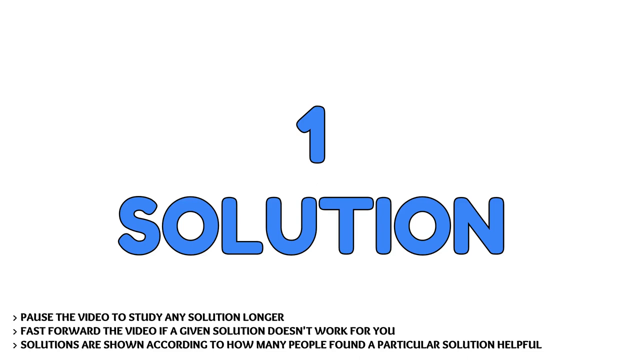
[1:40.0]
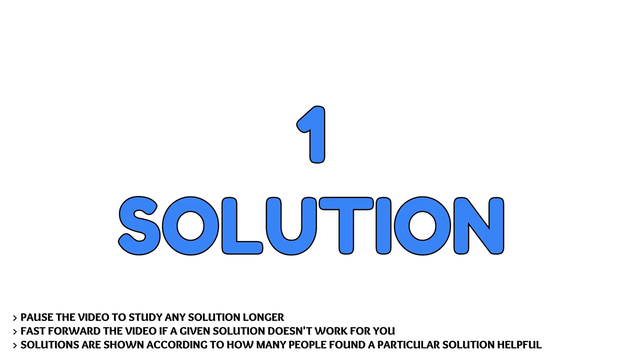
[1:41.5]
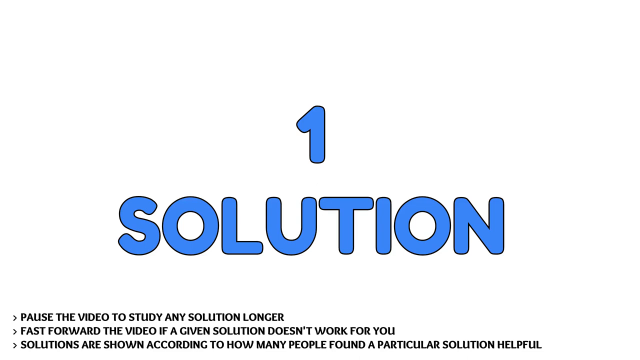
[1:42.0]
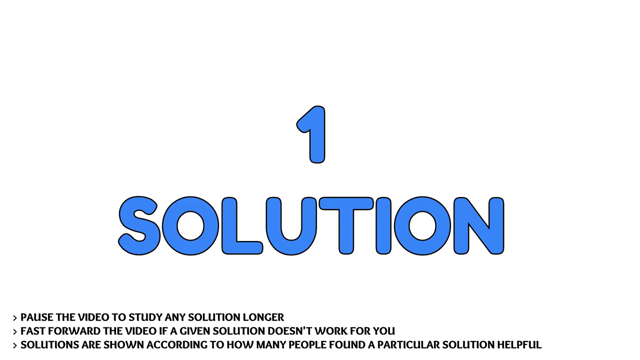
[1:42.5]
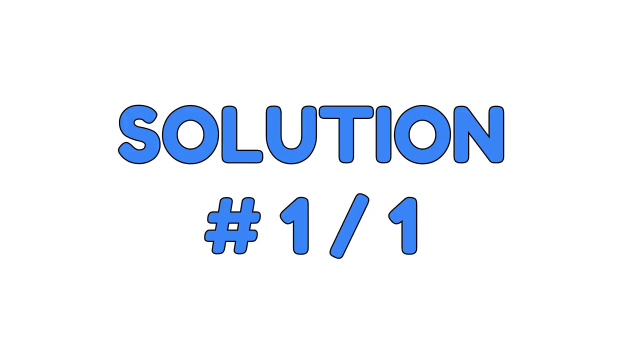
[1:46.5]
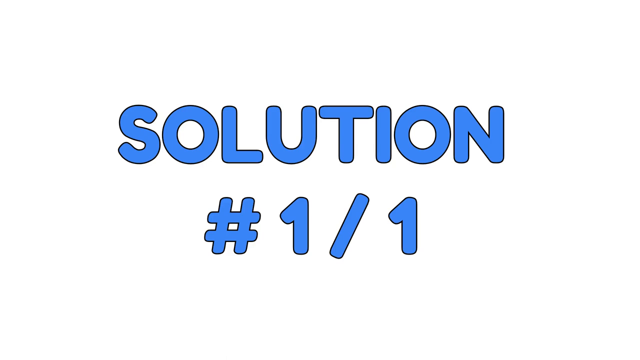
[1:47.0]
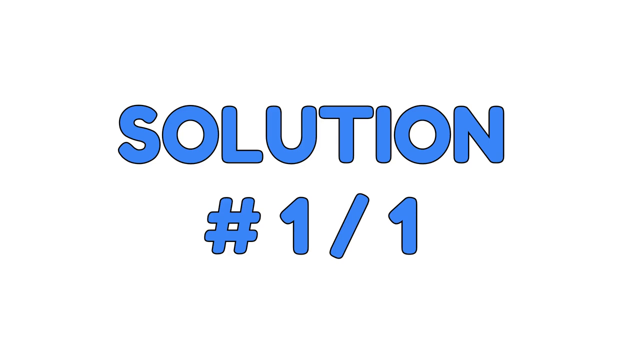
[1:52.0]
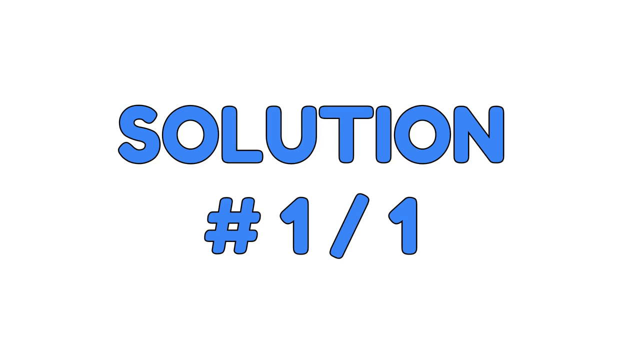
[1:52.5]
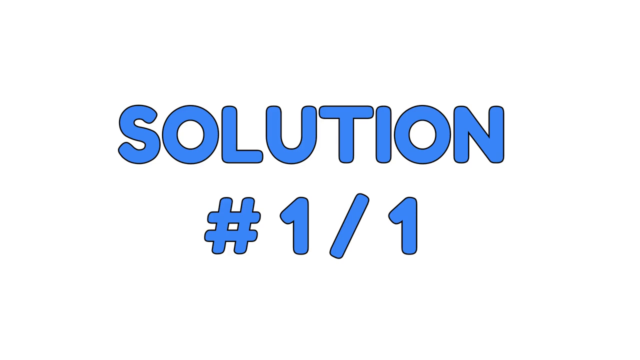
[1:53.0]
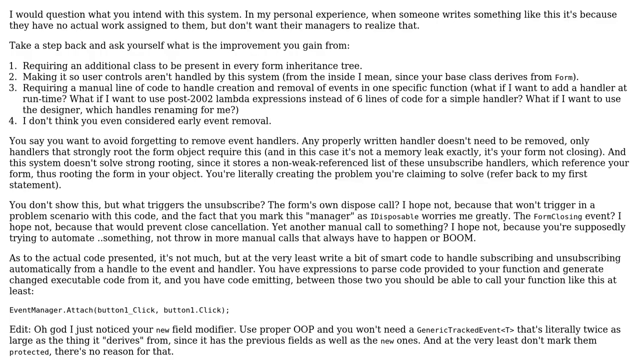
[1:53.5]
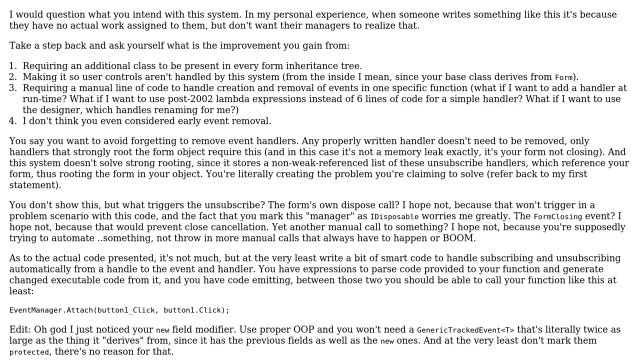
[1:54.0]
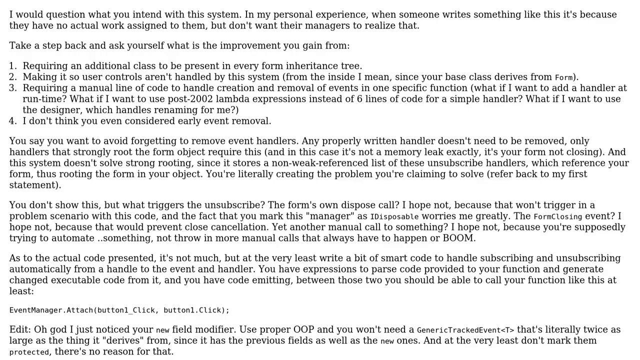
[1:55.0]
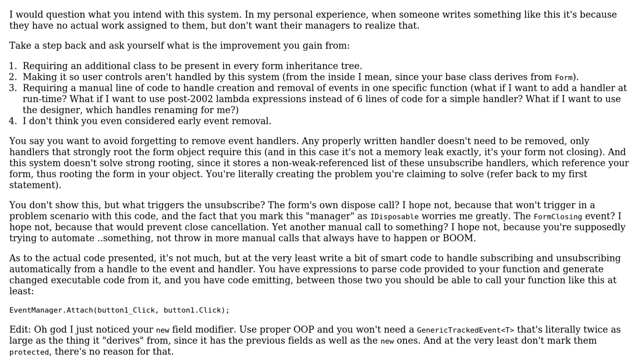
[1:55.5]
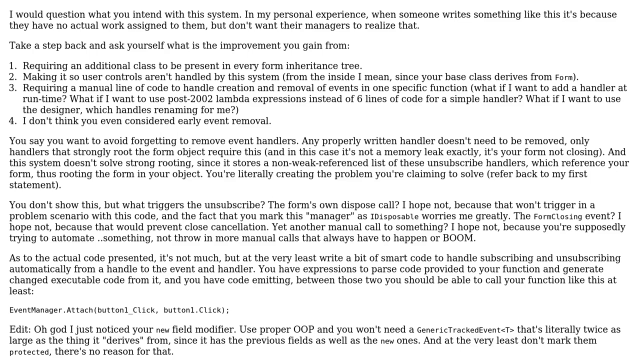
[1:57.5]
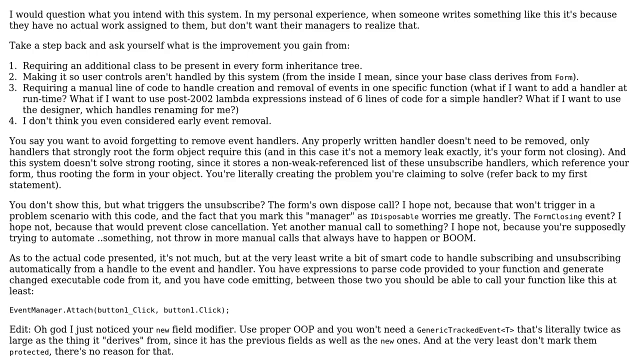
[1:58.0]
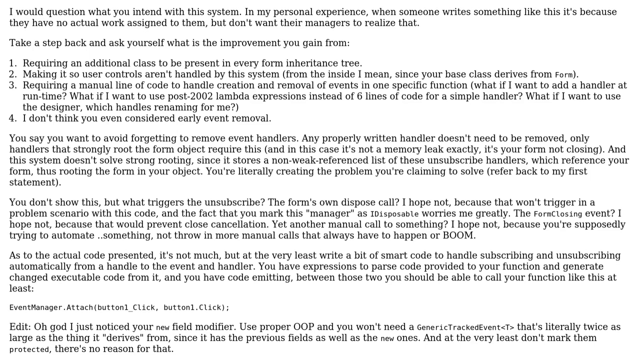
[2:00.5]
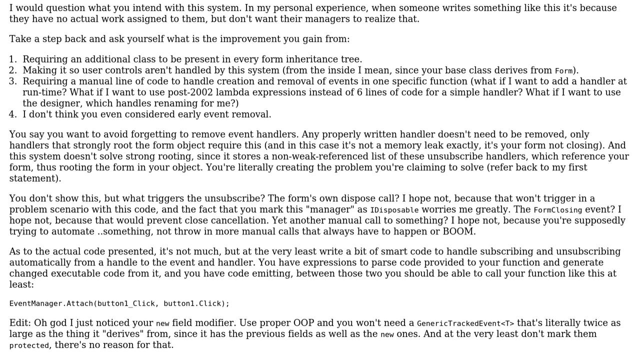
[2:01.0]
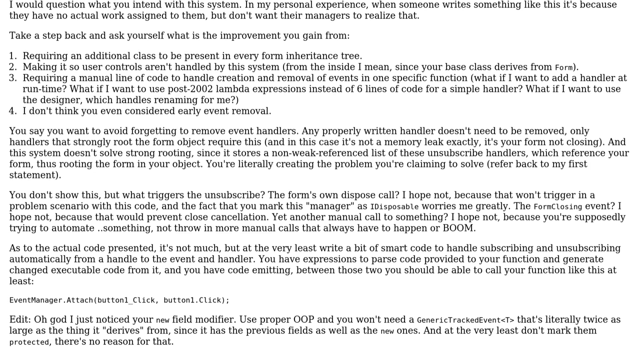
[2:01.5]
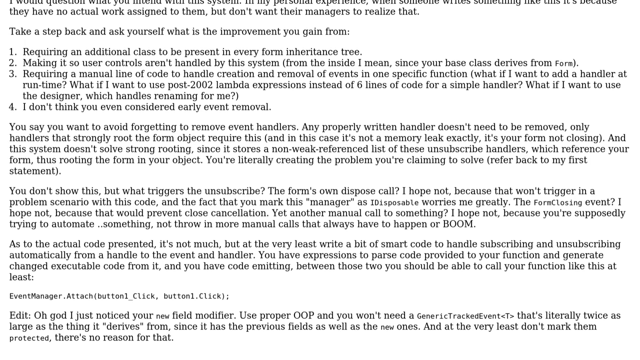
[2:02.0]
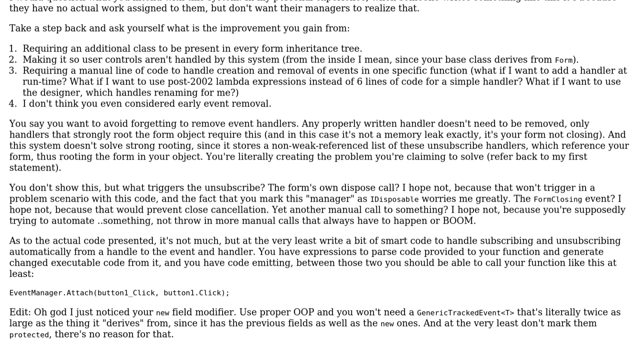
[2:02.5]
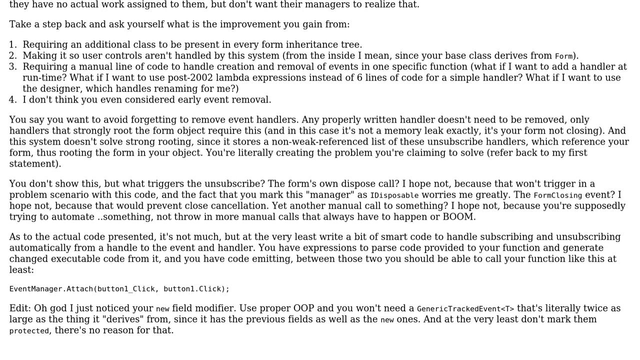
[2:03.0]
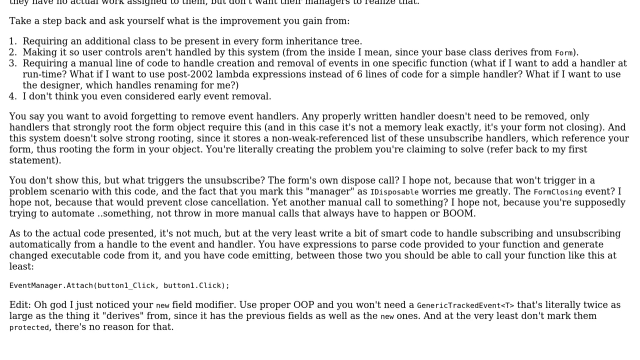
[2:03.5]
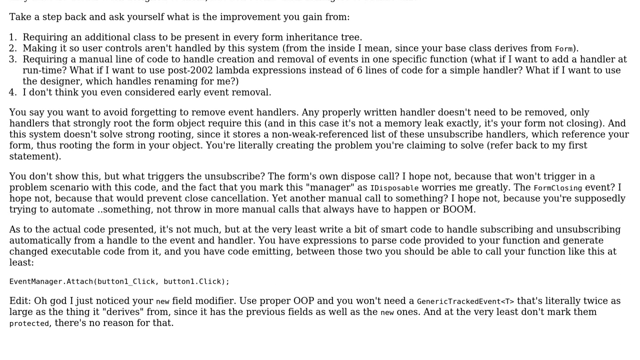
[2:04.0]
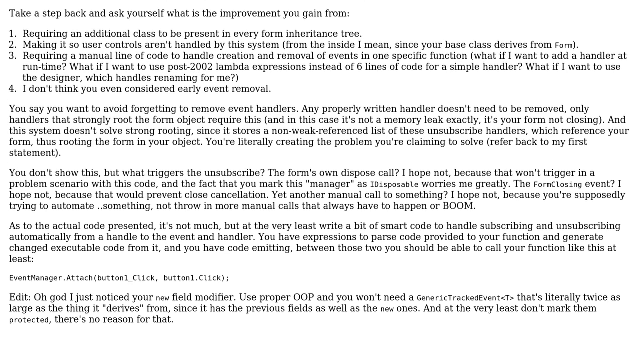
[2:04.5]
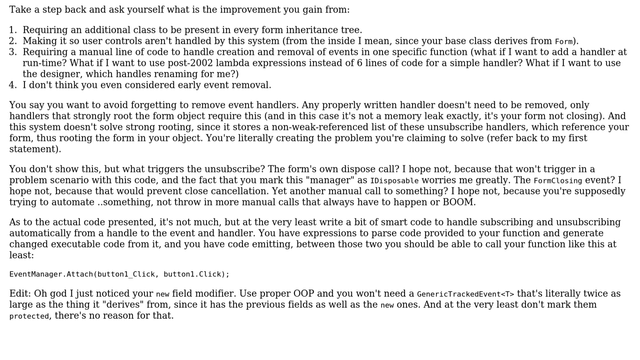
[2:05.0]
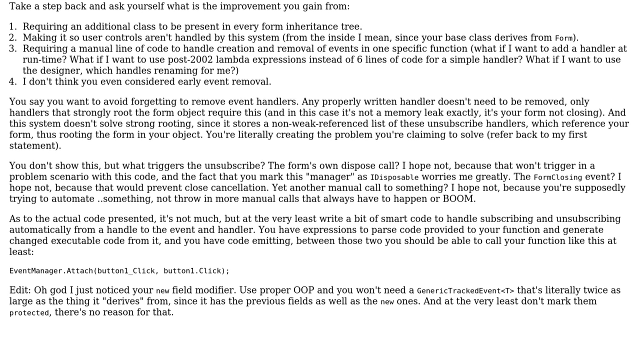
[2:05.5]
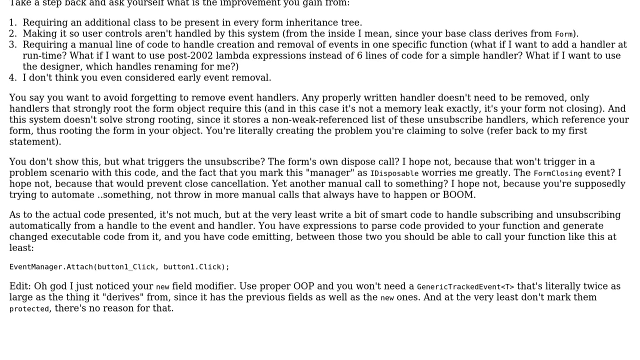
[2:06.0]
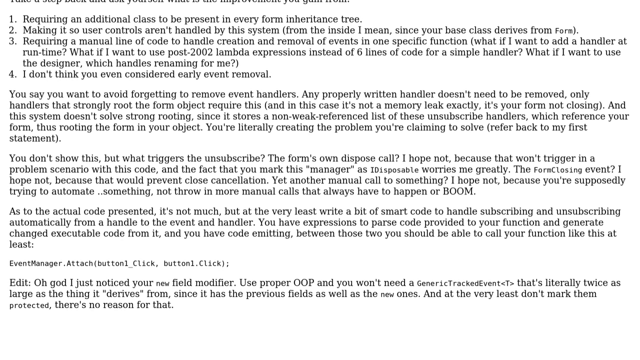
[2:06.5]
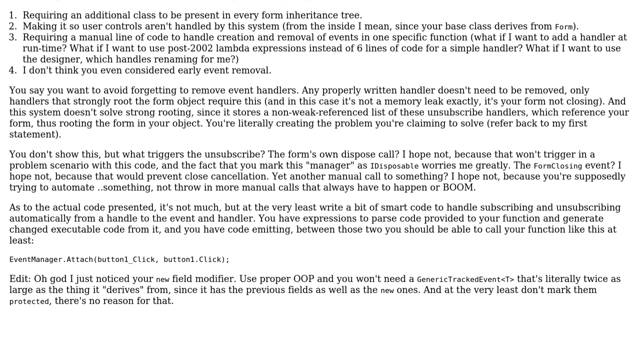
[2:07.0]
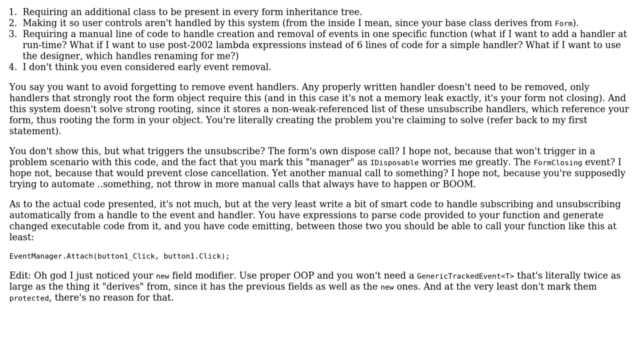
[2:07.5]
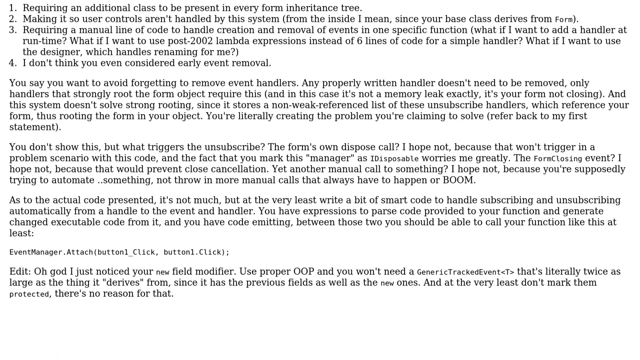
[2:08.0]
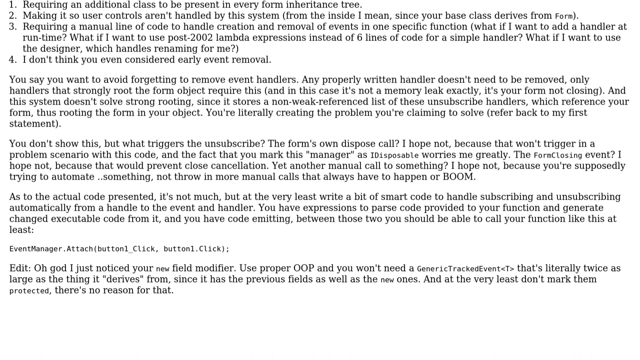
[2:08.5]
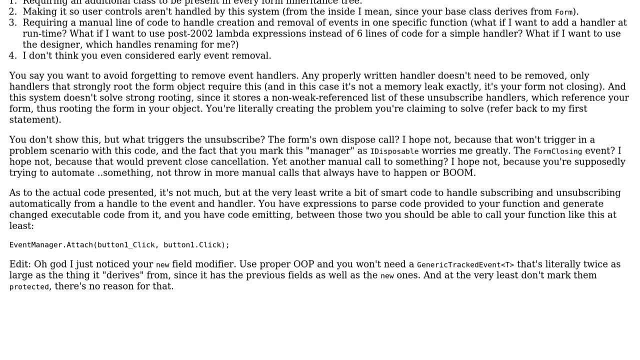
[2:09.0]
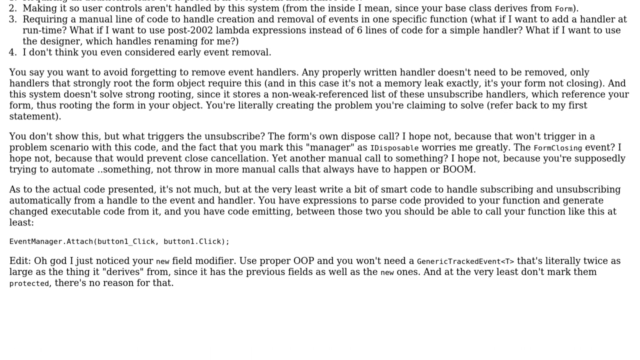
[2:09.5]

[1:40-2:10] A white background shows blue bubble letters in the middle: a number 1 with "solution" below it. In the bottom left-hand corner, small bold black writing says "pause the video to study any solution longer. Fast forward the video if a given solution doesn't work for you," and at the very bottom it says "solutions are shown according to how many people found a particular solution useful." The view then pans to another white background with blue bubble letters in the middle that say "solution," with a number sign and "1-1" beneath it; nothing else is on this plain white page. It then pans to a white screen filled with a lot of very small plain black text. Among the opening lines is "In my personal experience when someone writes something like this it's because they have no actual work assigned to them but don't want their managers to realize that." Below are four bulleted numbered points followed by more paragraphs, and the screen slowly scrolls down.